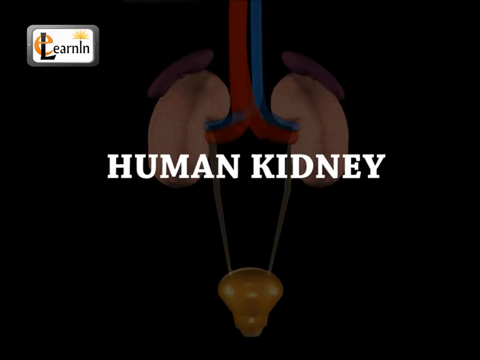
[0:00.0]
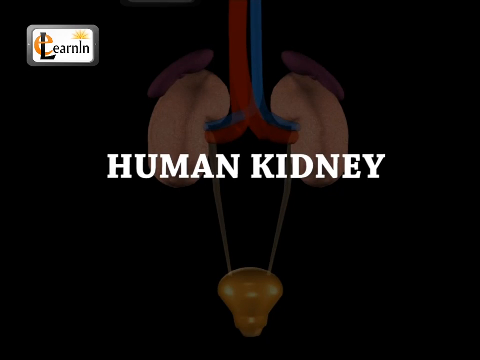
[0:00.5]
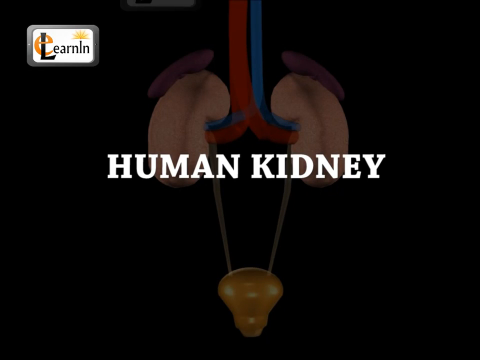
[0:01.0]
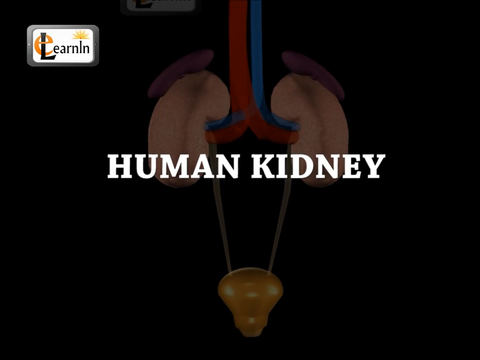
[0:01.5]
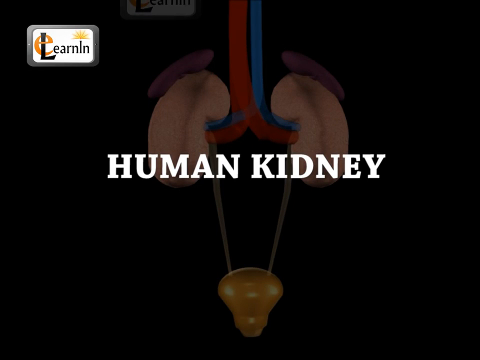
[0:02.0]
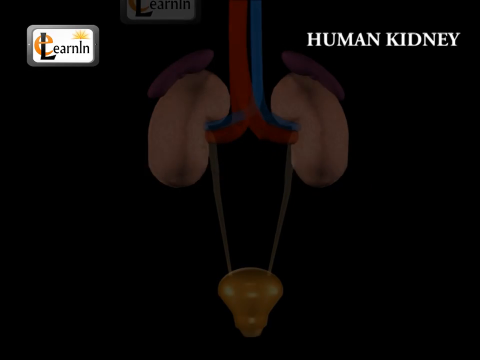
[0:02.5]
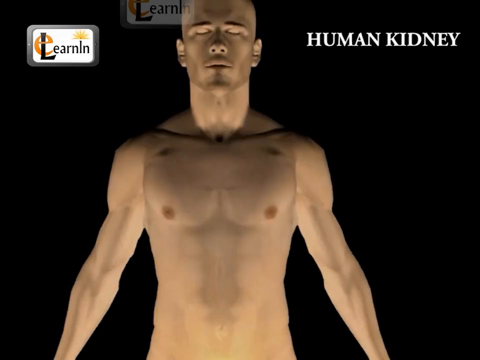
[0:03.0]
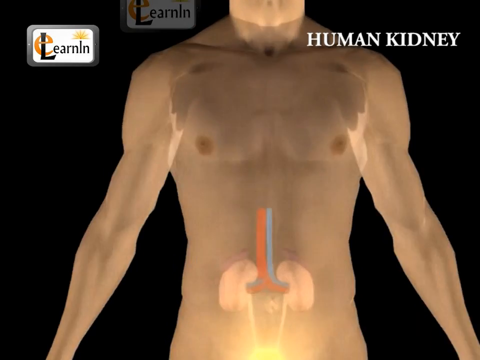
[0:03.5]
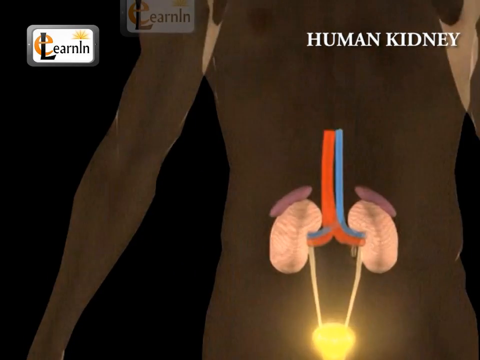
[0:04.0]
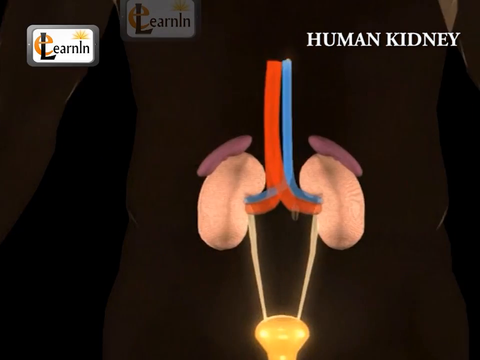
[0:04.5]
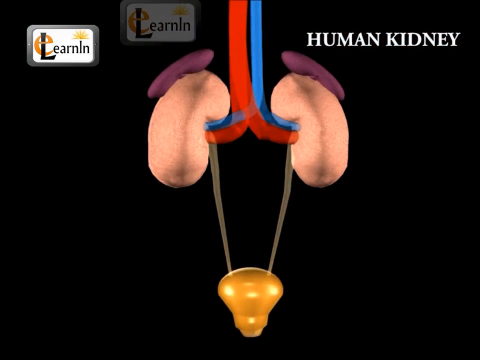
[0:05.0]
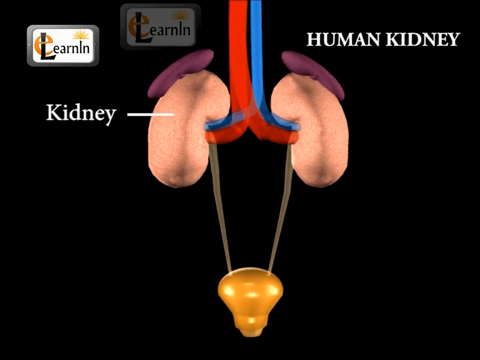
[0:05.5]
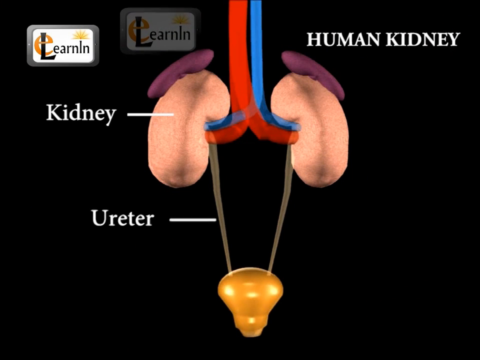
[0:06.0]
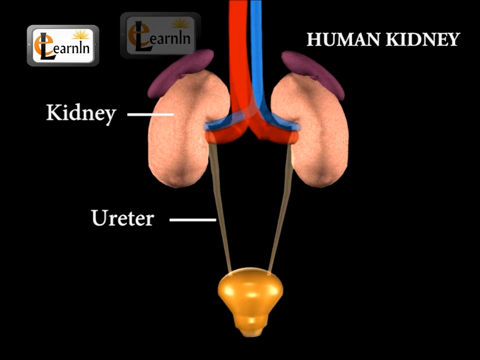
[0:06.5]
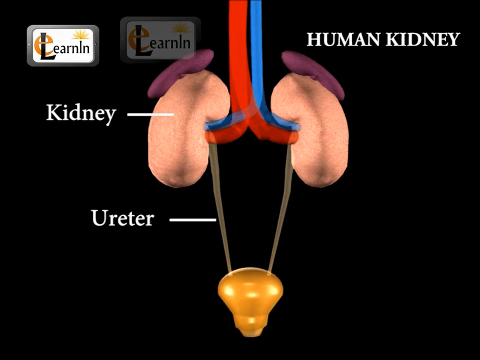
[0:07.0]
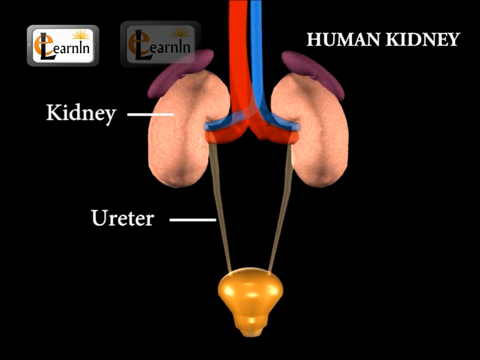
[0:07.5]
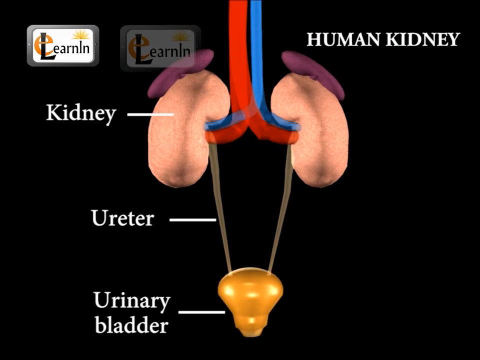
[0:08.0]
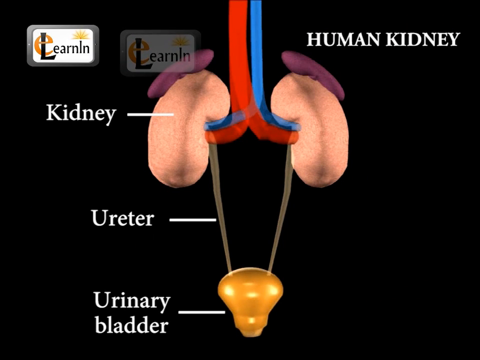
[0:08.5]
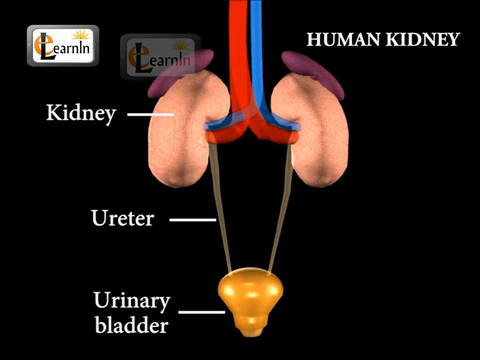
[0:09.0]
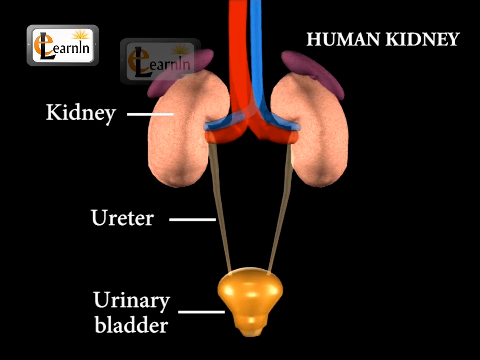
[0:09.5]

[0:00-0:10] White text reading "Human Kidneys" occupies the central part of the screen. On the black background behind it is an image representing two human kidneys in a schematic way. The illustration then animates, showing a schematic human figure with a rather quick zoom onto two kidneys connected to two blood vessels, one represented in red and the other in blue. In the upper right corner, white text on a blue background is confined to that corner of the image. White text then appears on the black background on the left side of the screen, with the words connected to various parts of the kidneys by rather thin white segments.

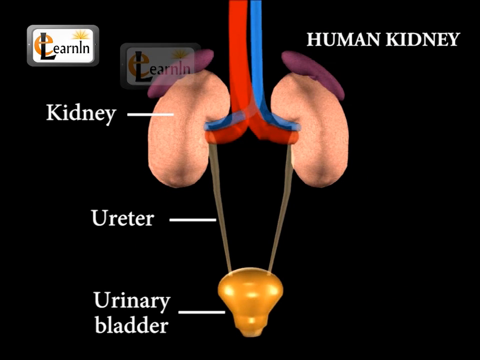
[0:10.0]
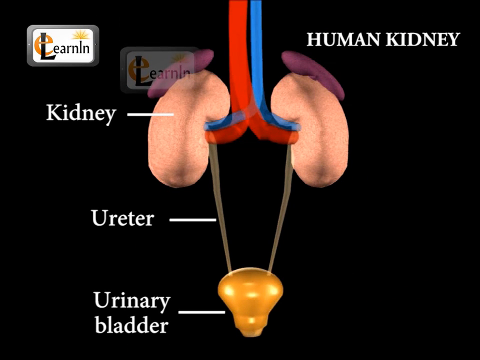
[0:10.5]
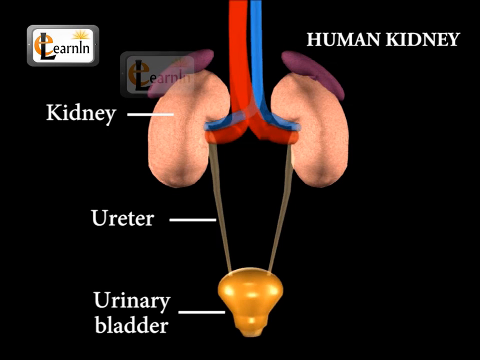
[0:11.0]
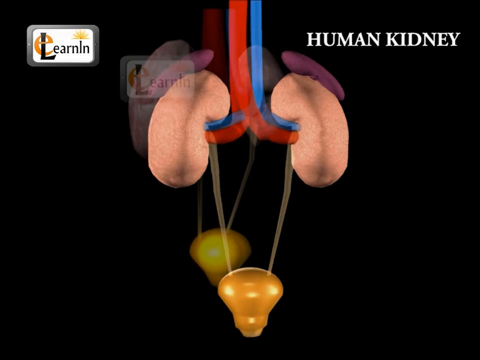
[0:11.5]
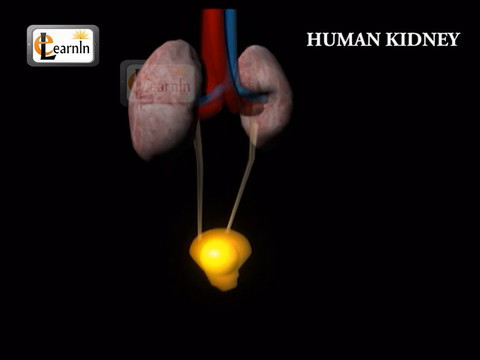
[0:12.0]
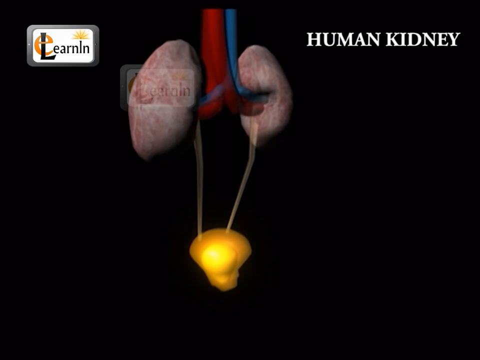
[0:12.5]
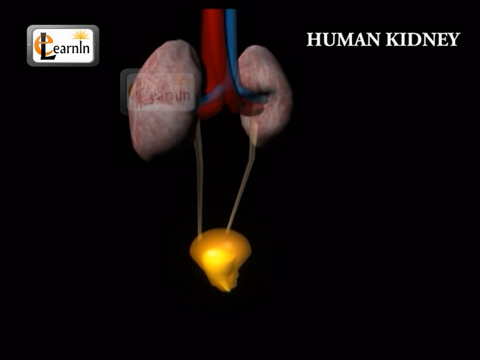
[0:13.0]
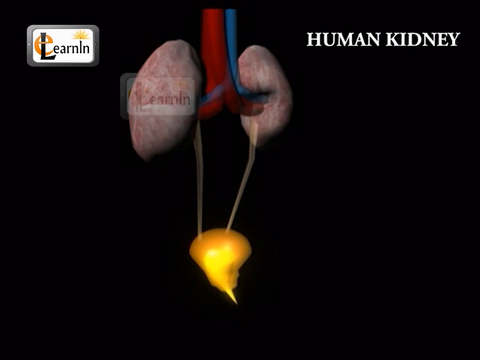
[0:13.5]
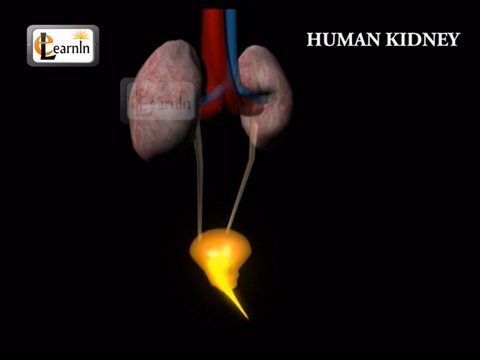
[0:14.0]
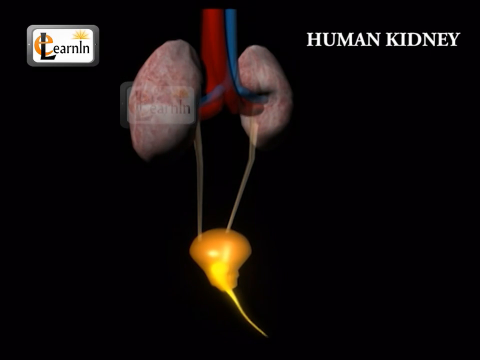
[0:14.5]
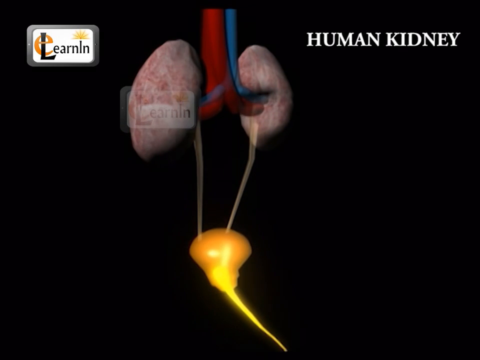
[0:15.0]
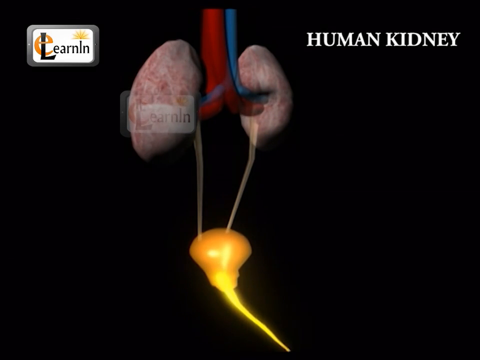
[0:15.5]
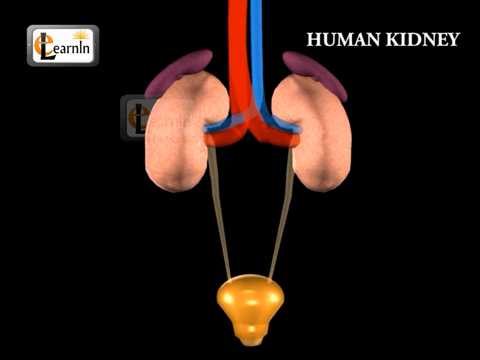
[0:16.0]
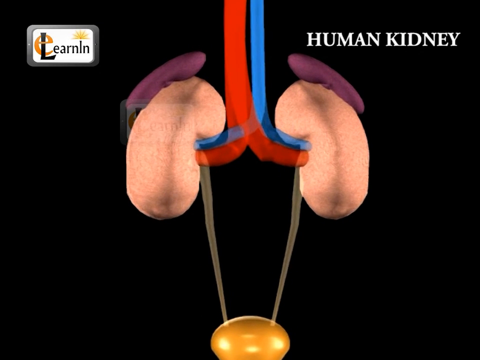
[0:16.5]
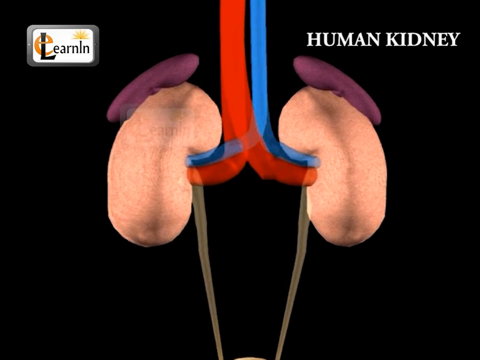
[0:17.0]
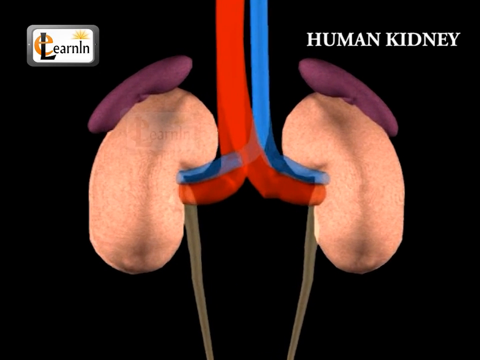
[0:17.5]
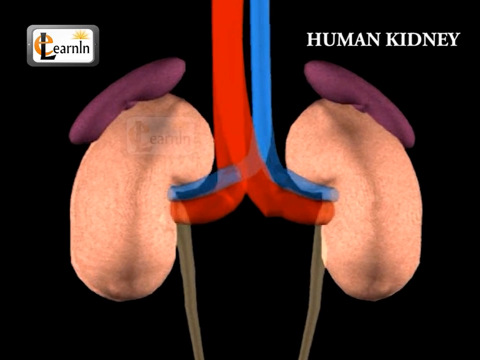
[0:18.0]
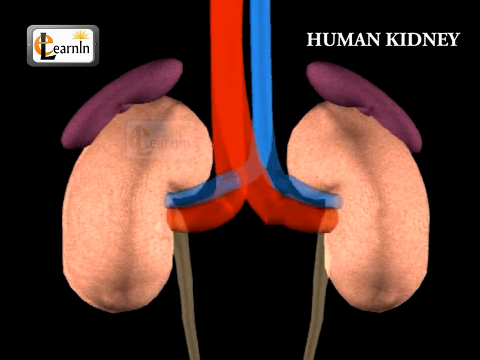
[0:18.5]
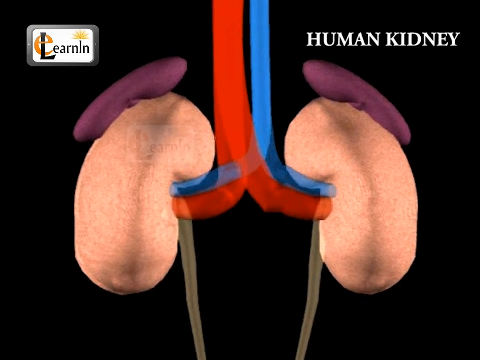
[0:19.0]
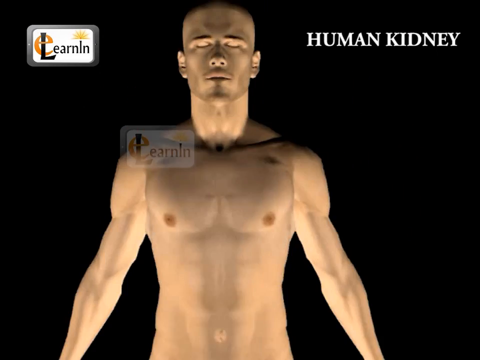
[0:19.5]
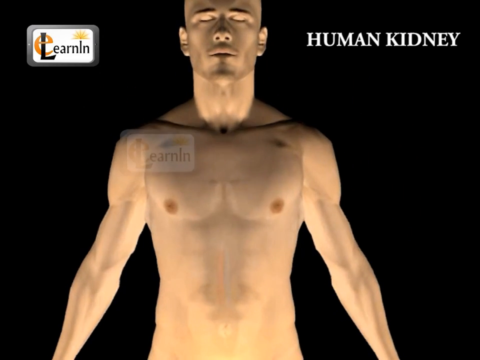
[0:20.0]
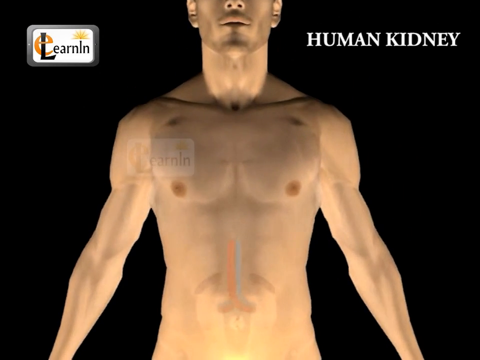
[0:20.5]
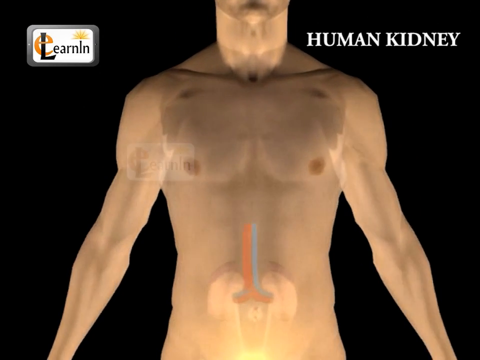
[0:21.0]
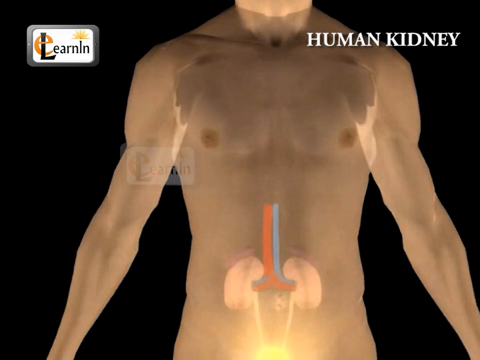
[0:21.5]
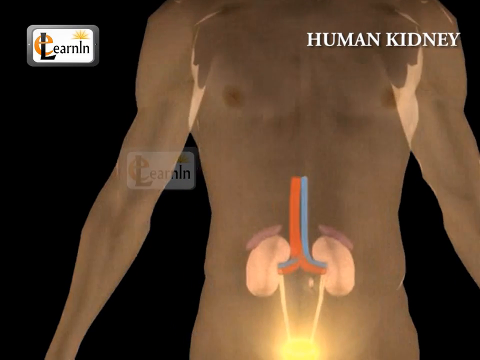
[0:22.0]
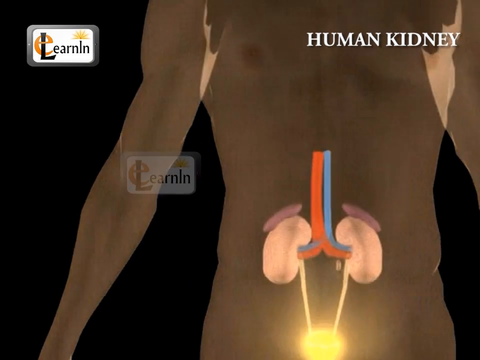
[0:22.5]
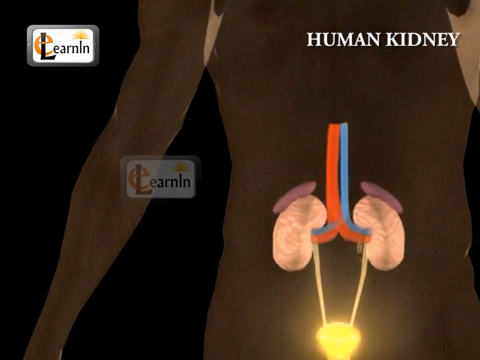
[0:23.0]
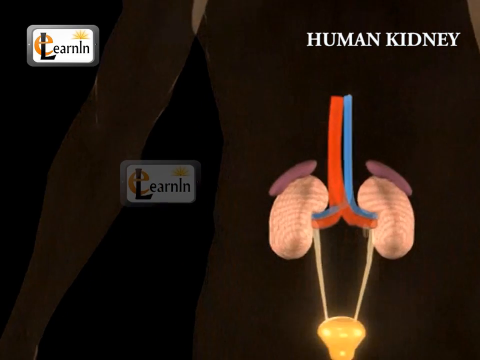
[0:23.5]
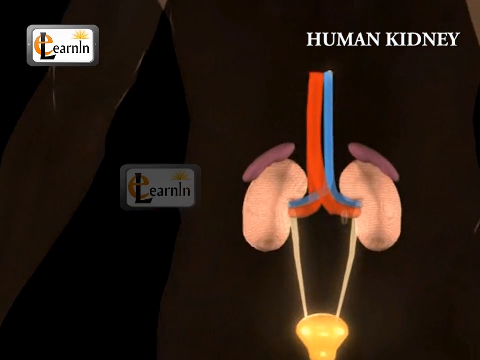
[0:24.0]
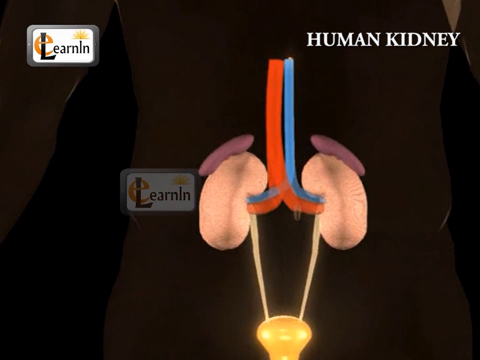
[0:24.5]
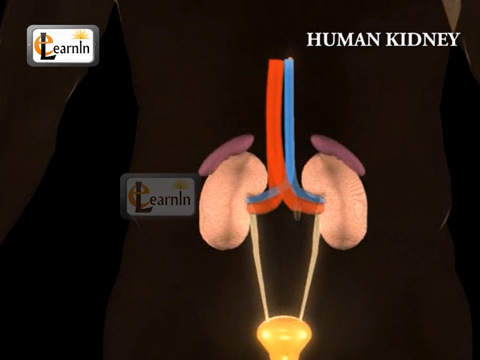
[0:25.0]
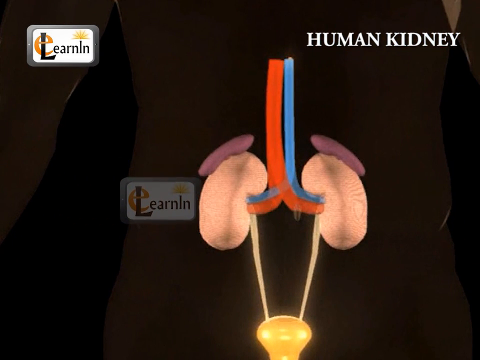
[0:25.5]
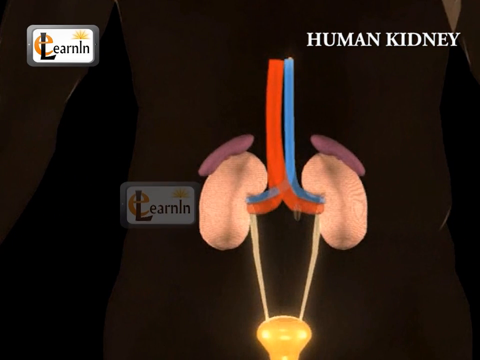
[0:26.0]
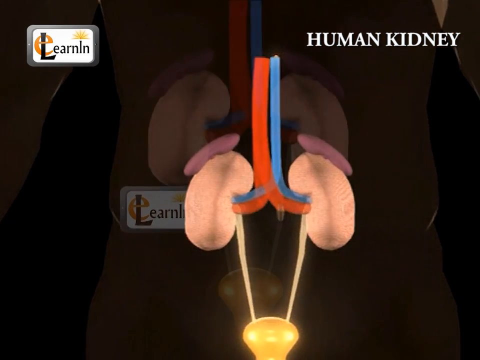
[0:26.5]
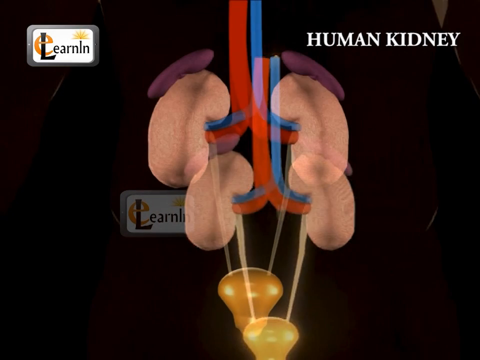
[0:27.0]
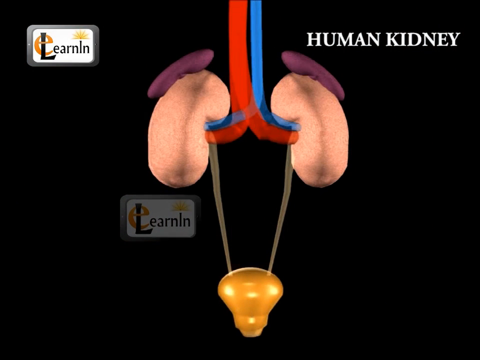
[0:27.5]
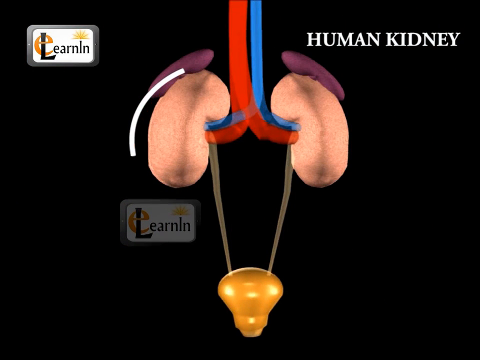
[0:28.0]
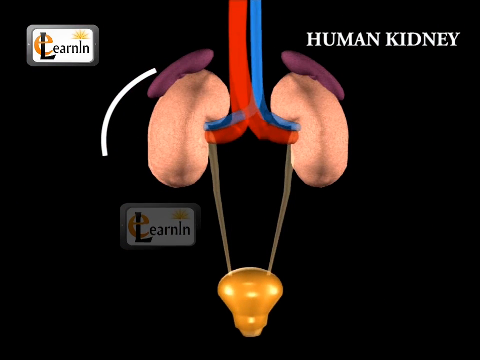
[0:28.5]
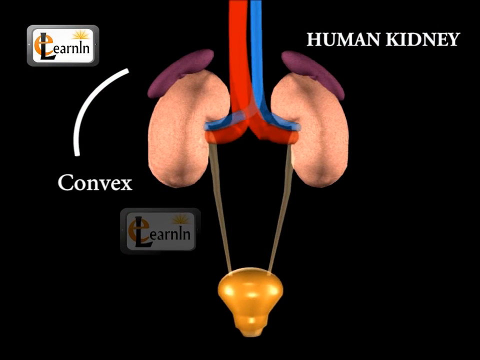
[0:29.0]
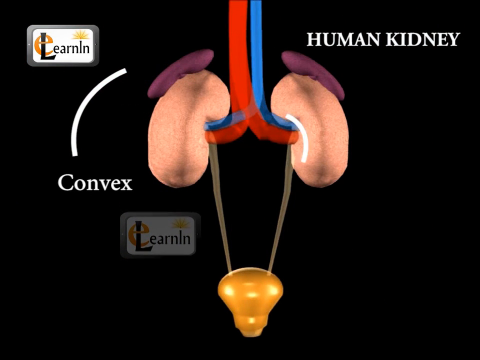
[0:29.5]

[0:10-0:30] A schematic representation of two kidneys appears with white words positioned on the left side of the screen. The words are connected by rather thin white segments to the various components of the kidneys and to the structures connected to them. The writing is on a black background, as is the illustration in the center of the image and further white writing confined to the upper right corner of the frame. Immediately after, a three-dimensional representation of two human kidneys is shown, with a very slow zoom into the central part of the kidneys. A stylized human figure follows, and the camera moves to show, in the central part of the screen, the structure of the kidneys and the components of the organs connected to them.